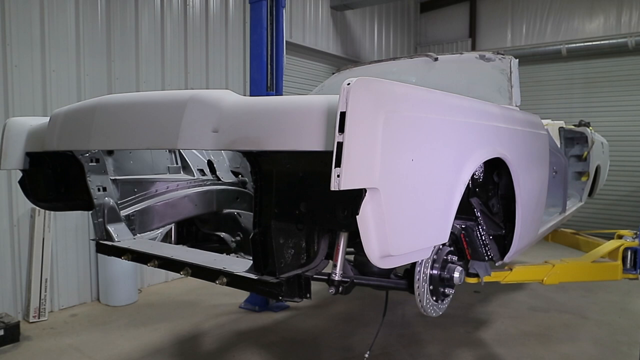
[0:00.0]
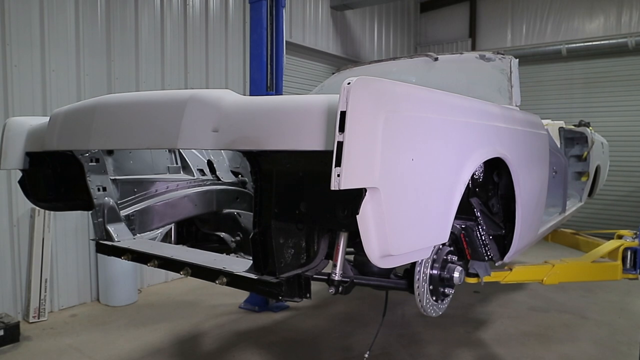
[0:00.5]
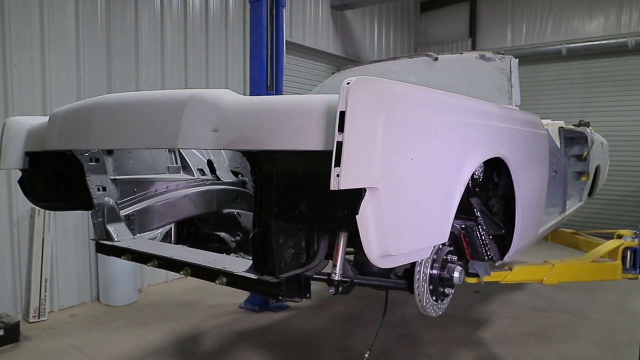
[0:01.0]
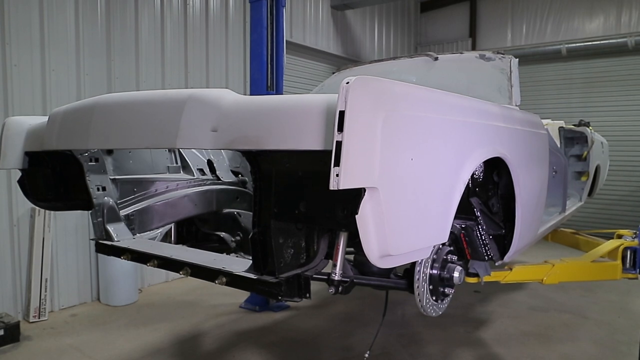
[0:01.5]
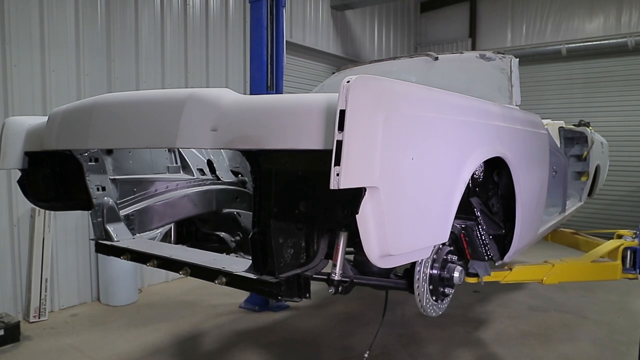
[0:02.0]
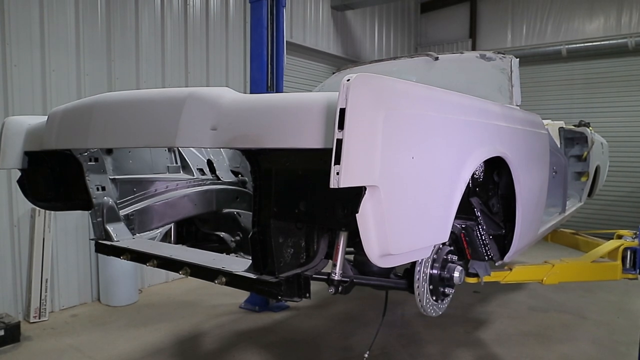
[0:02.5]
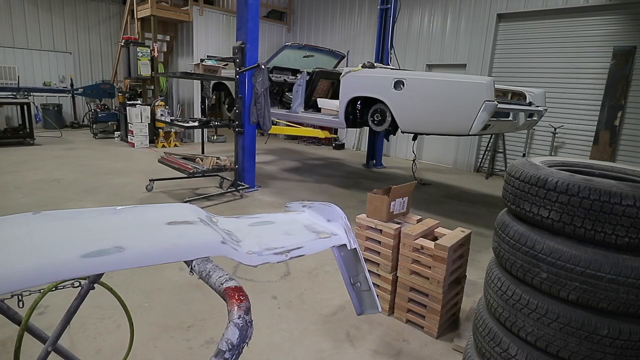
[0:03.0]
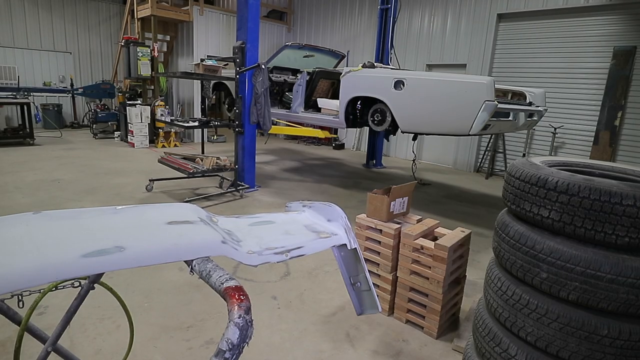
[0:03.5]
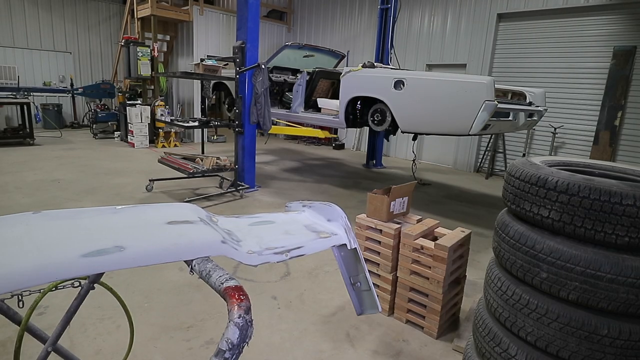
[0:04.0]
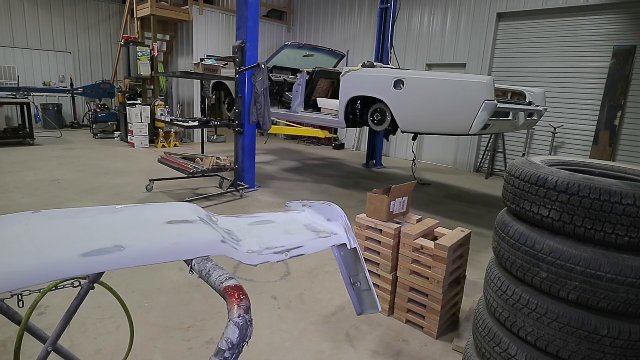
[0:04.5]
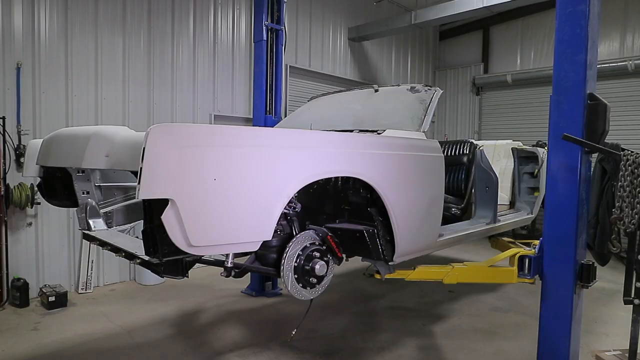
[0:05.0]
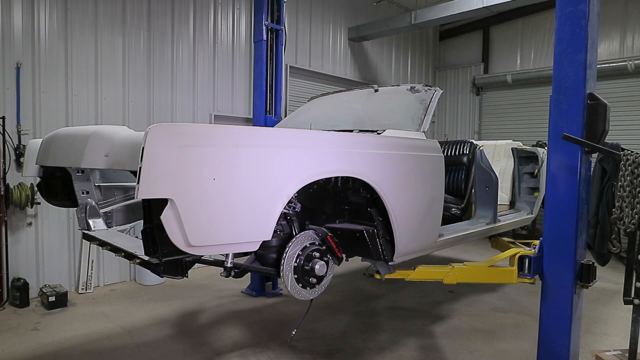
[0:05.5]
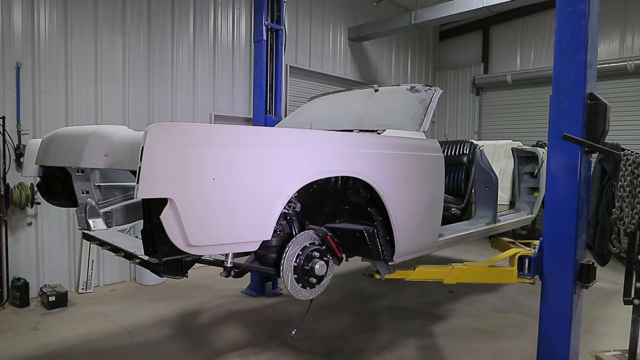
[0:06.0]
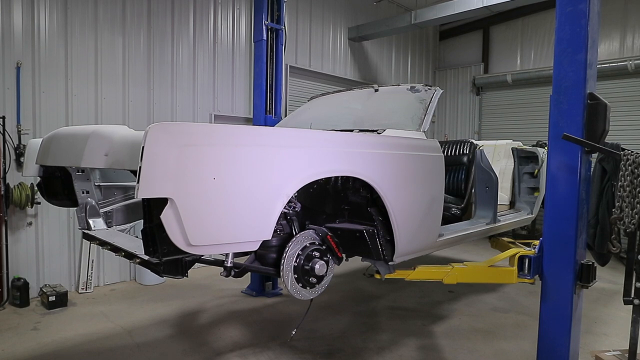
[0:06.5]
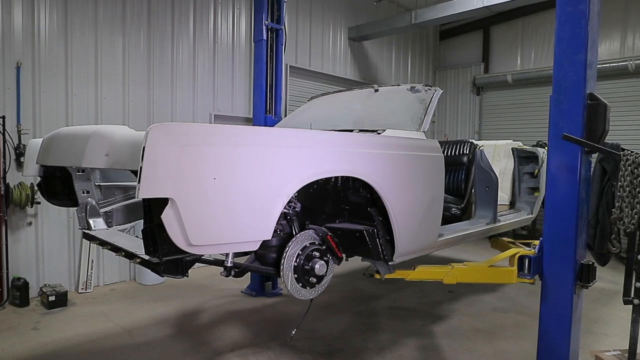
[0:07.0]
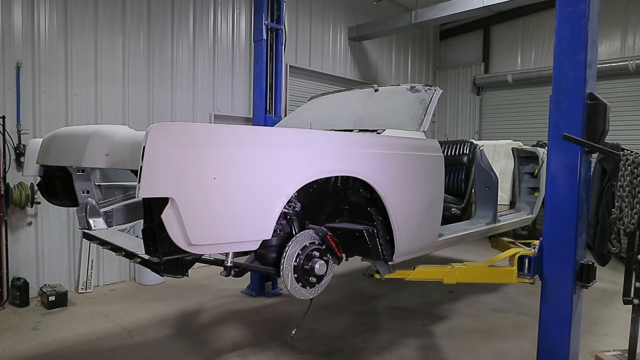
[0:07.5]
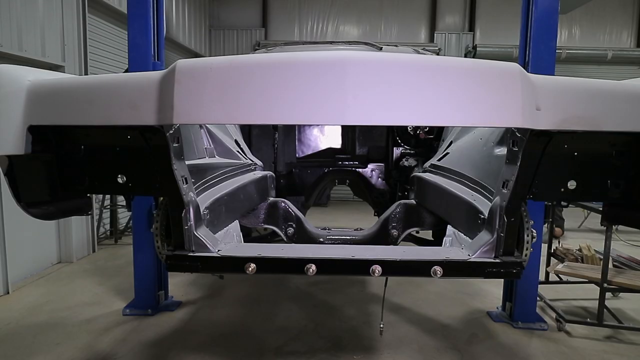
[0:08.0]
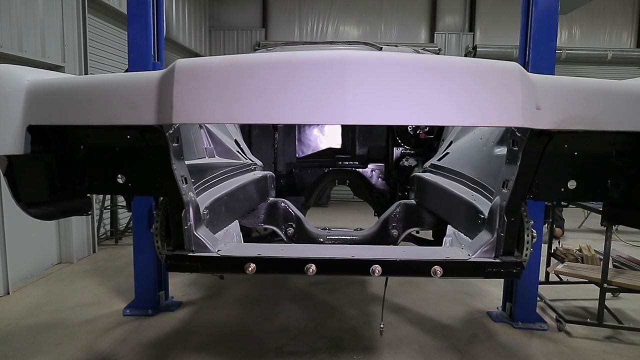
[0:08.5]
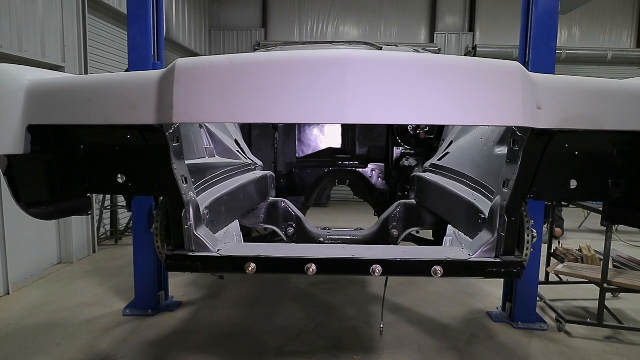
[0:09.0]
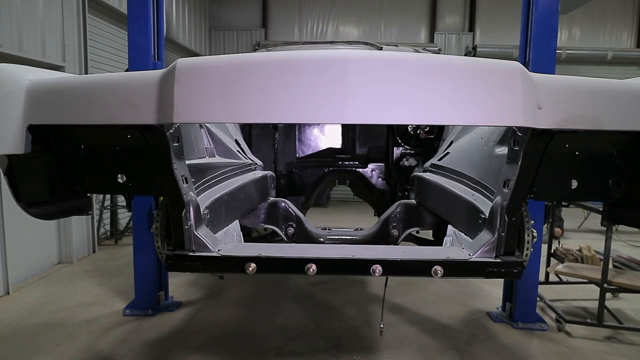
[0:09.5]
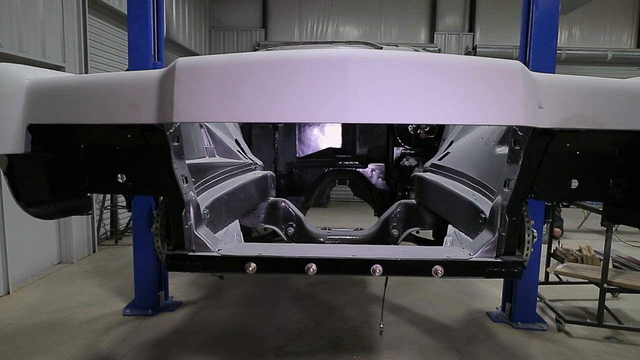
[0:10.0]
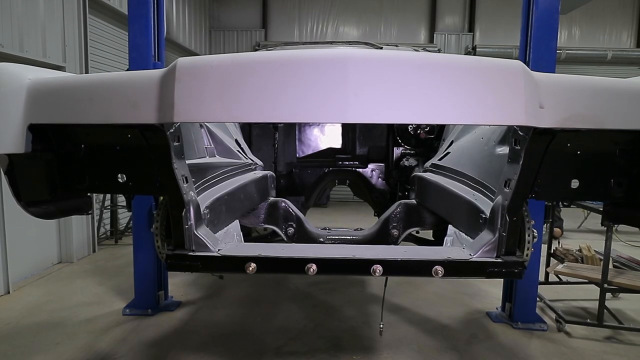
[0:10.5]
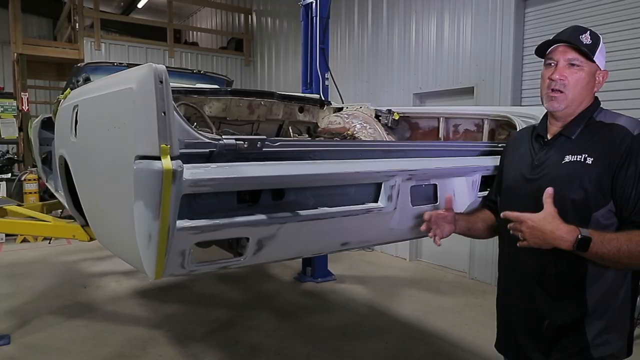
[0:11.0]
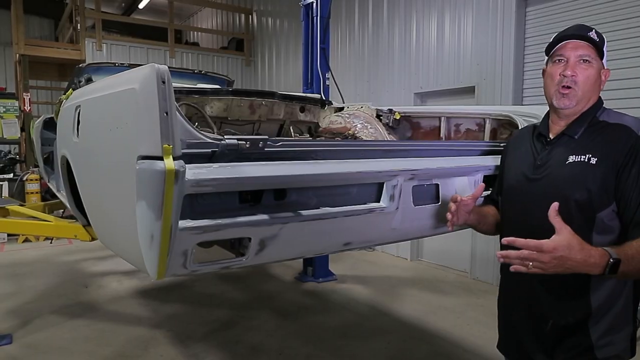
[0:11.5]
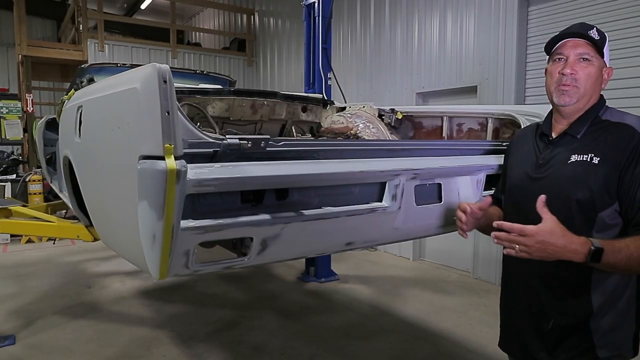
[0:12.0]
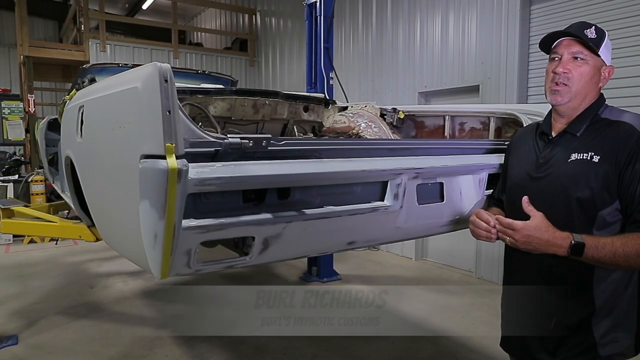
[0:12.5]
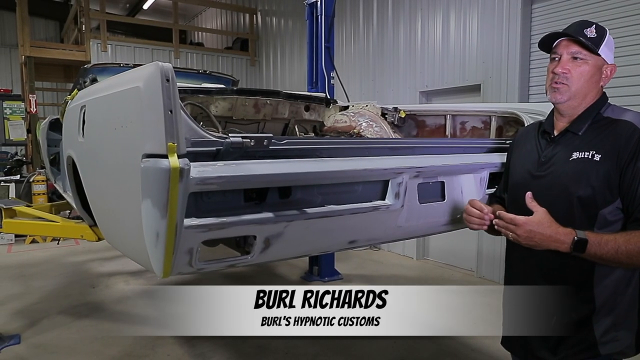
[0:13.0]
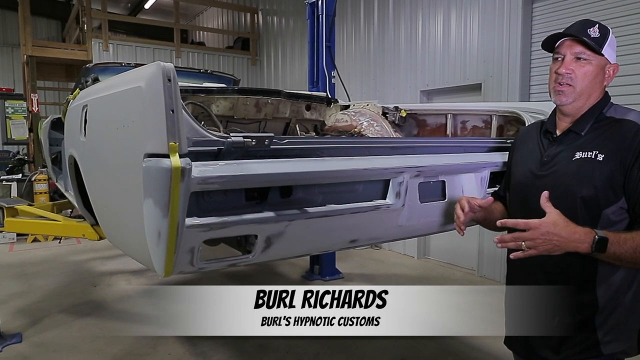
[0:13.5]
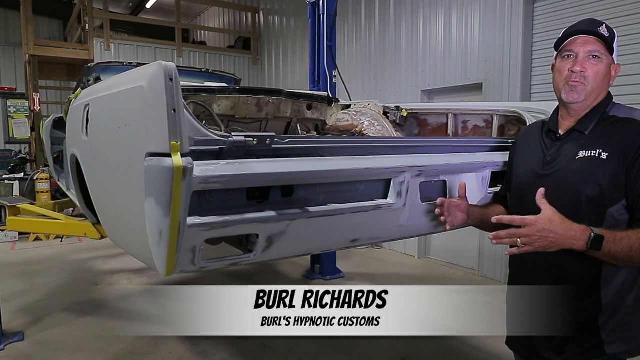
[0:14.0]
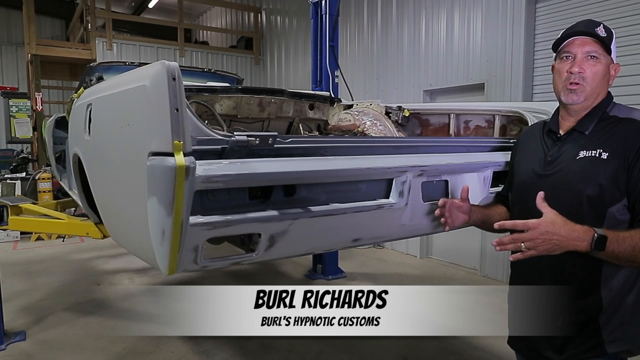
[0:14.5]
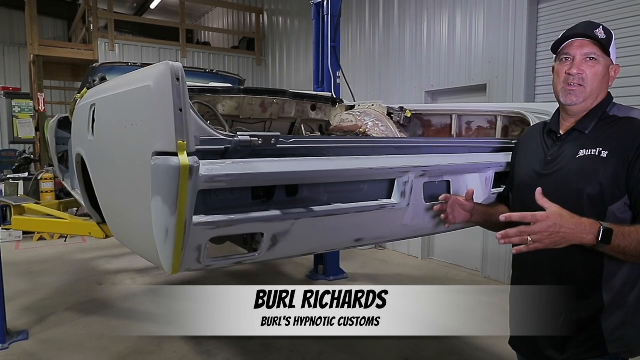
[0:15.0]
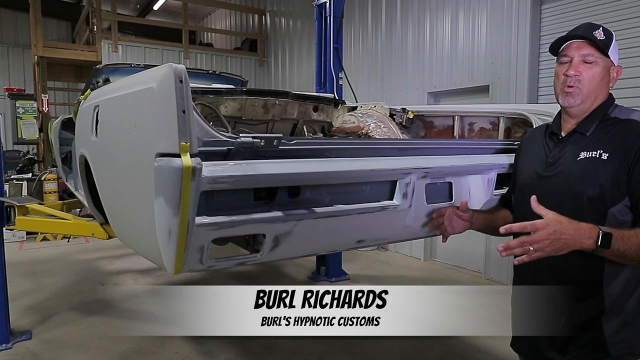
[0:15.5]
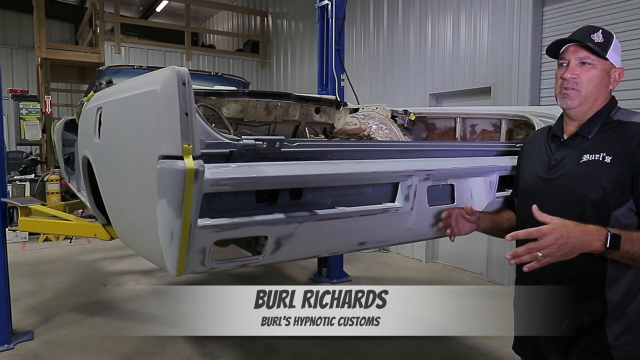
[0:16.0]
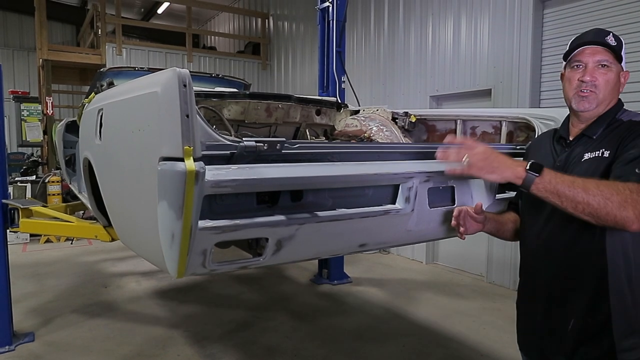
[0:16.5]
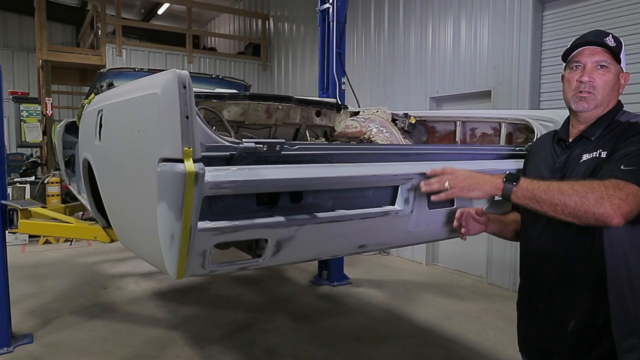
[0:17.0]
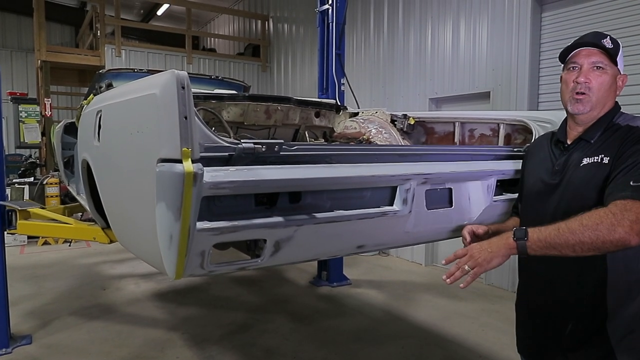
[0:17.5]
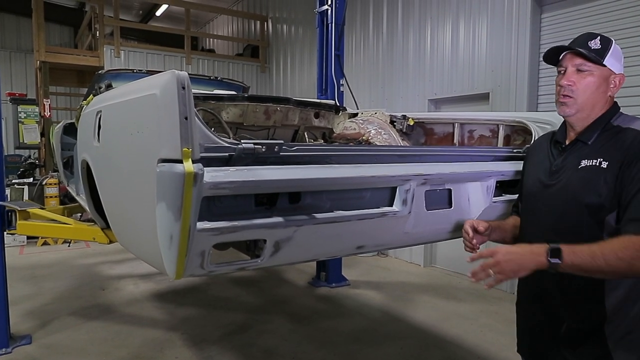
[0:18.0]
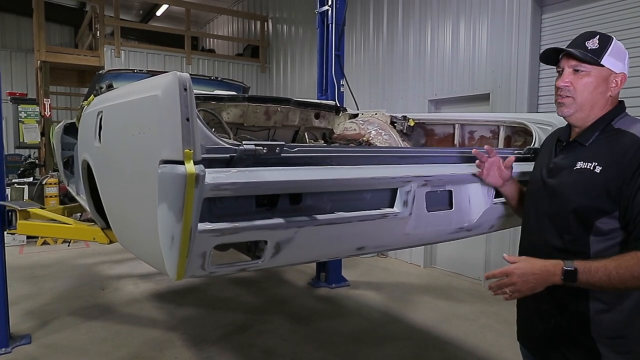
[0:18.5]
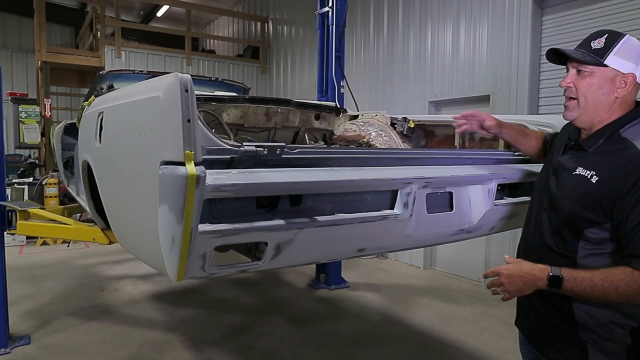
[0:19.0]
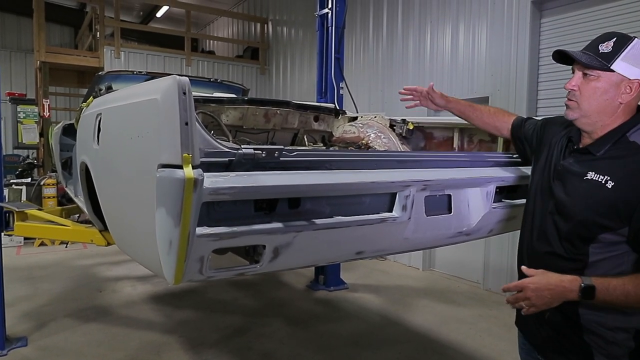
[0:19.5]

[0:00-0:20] The frame of a white car is up on a rack. The body of the car is visible, but it has no wheels; the car is a convertible-type vehicle. A man in a black shirt and a black and white hat talks and moves his arms as he points to different parts of the car's frame, and different features of the car are shown. The car is in a garage area with a gray metal door and gray metal walls. The rack is blue, and there are yellow pieces of machinery to the front of the vehicle. The view pans out, revealing another piece of the car's frame in a different part of the shop.